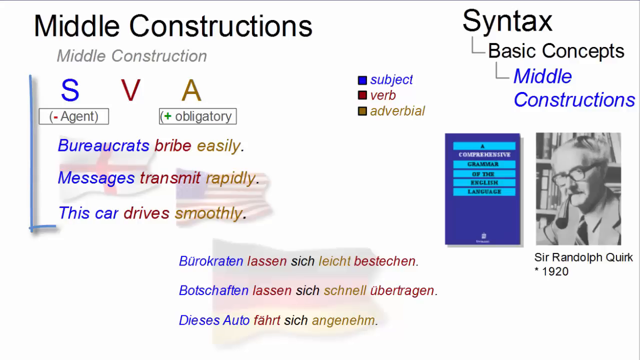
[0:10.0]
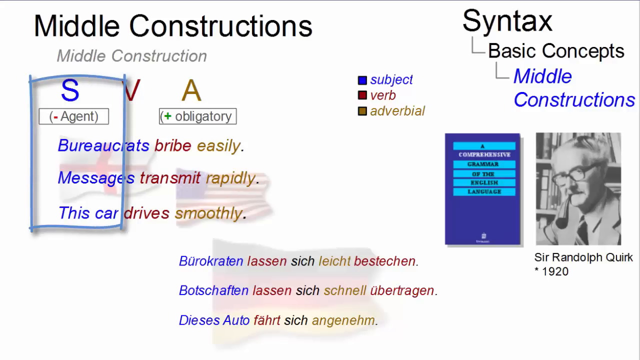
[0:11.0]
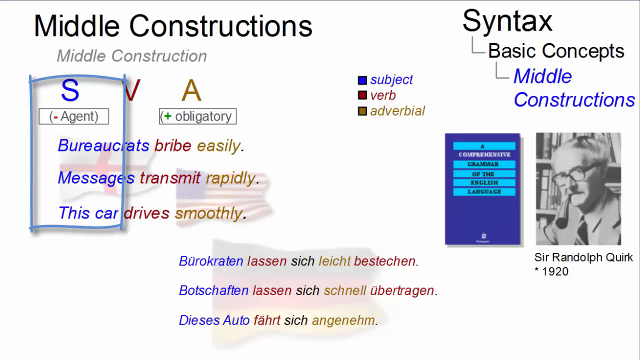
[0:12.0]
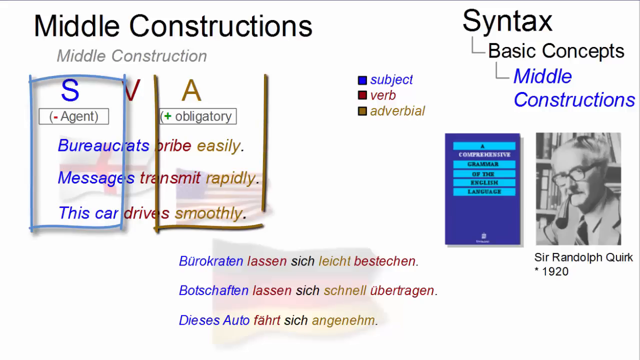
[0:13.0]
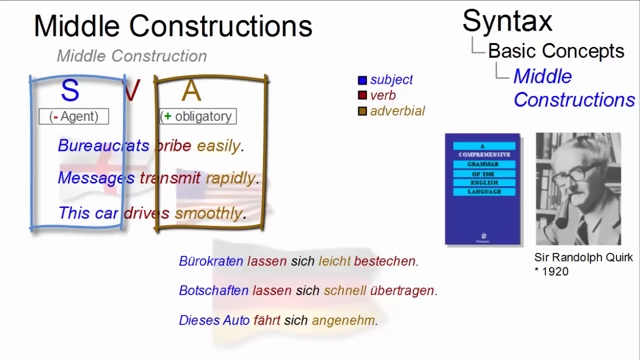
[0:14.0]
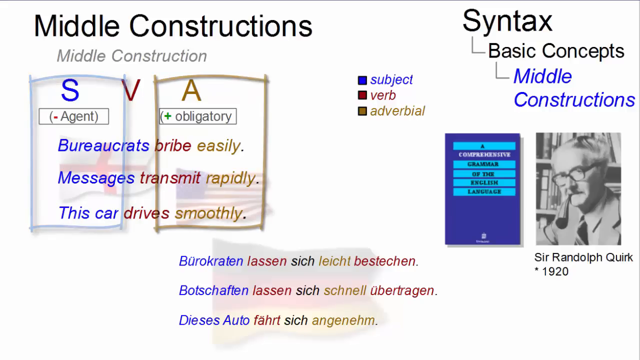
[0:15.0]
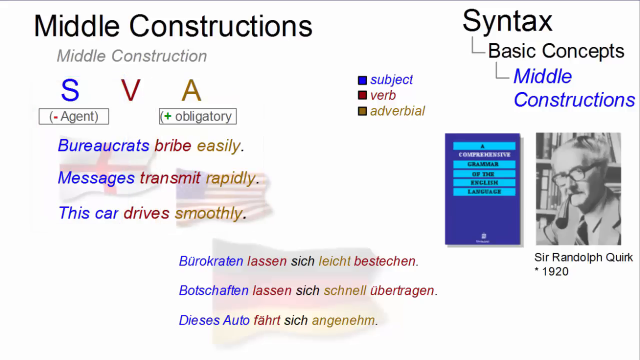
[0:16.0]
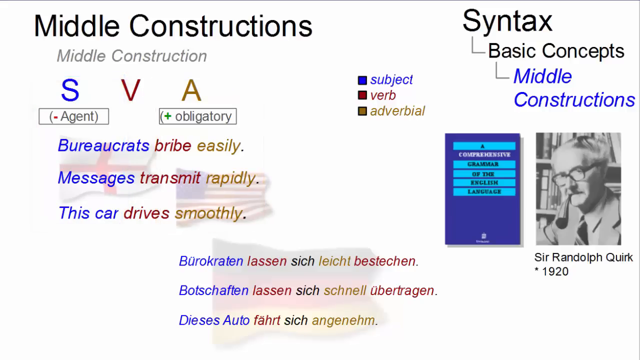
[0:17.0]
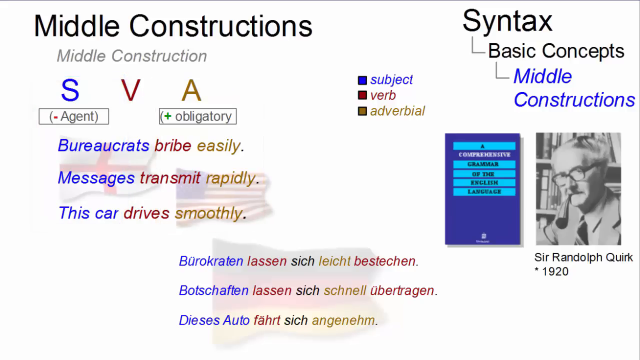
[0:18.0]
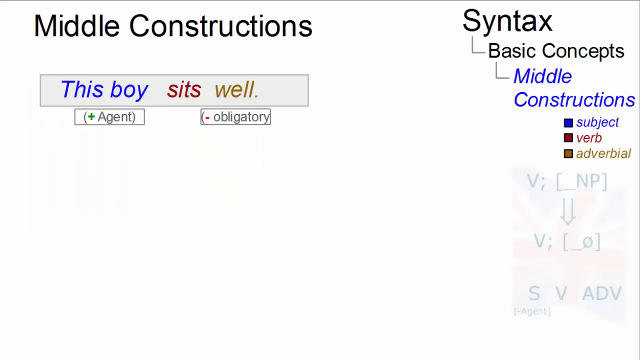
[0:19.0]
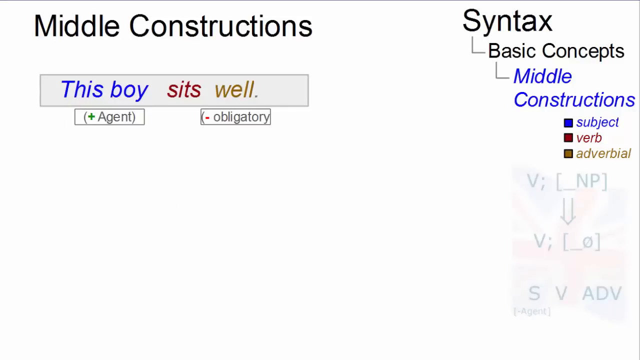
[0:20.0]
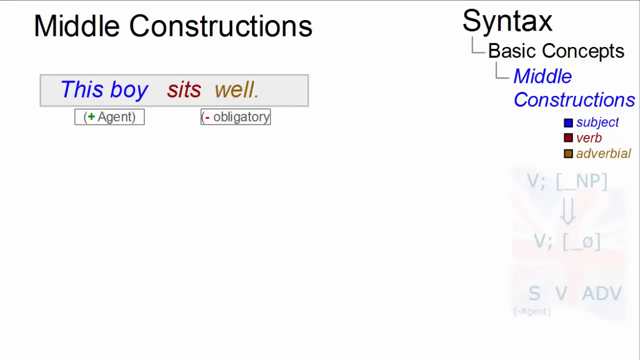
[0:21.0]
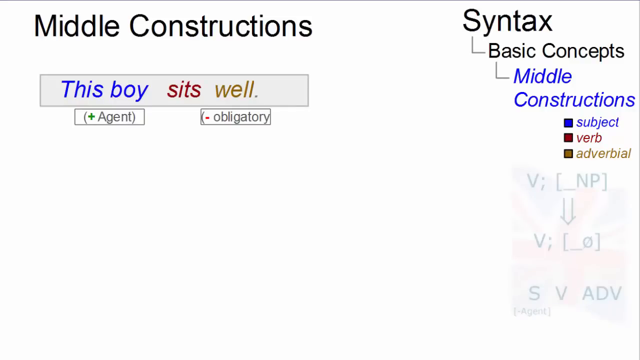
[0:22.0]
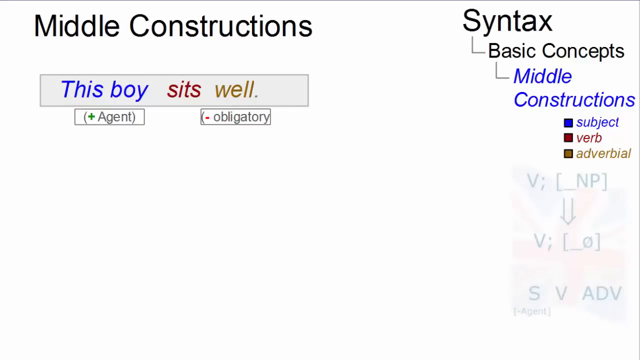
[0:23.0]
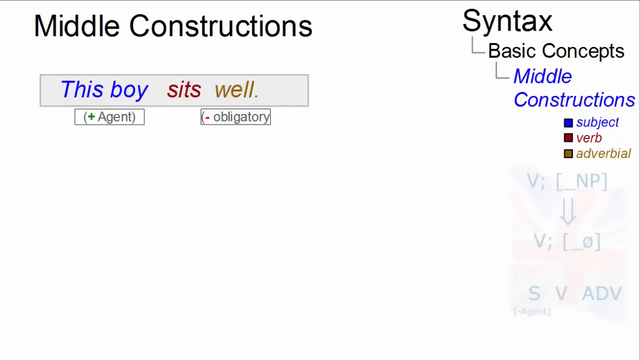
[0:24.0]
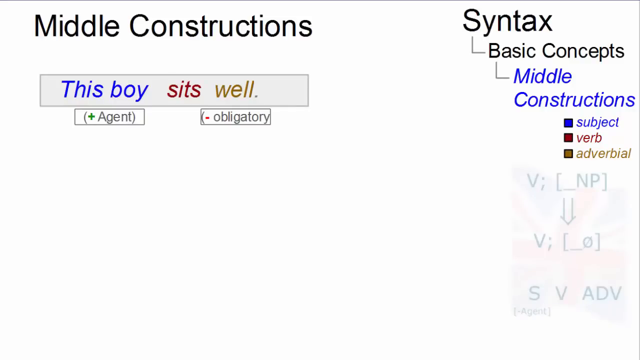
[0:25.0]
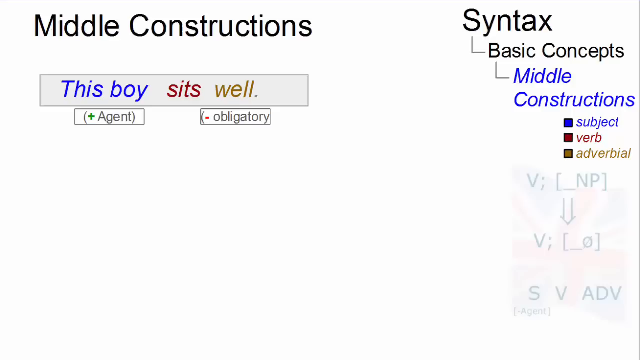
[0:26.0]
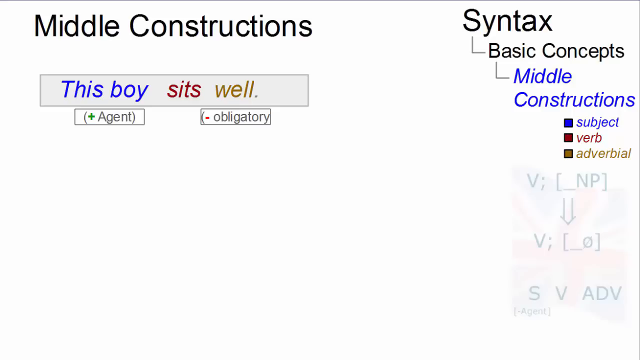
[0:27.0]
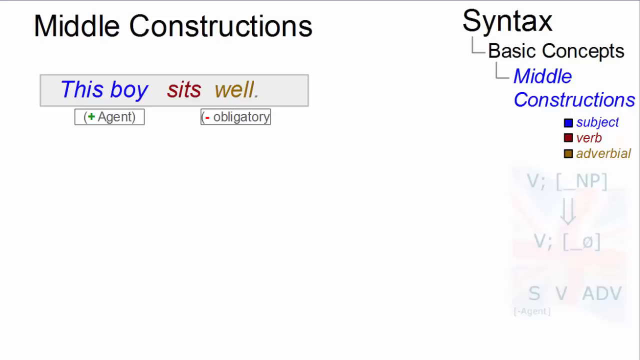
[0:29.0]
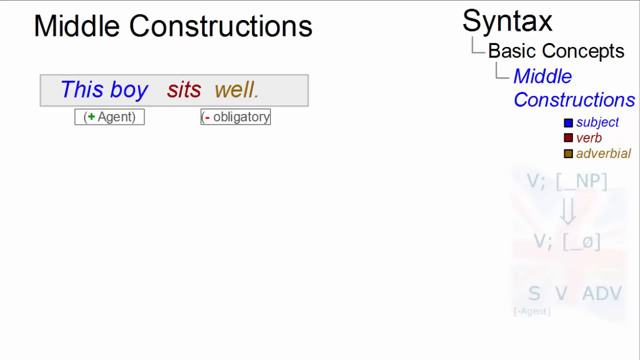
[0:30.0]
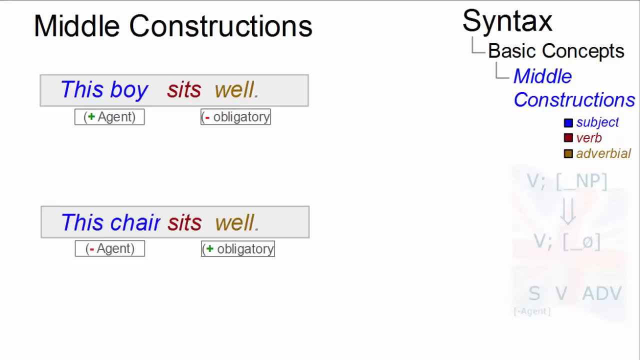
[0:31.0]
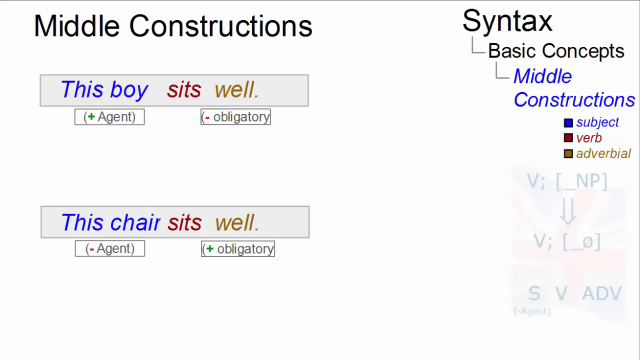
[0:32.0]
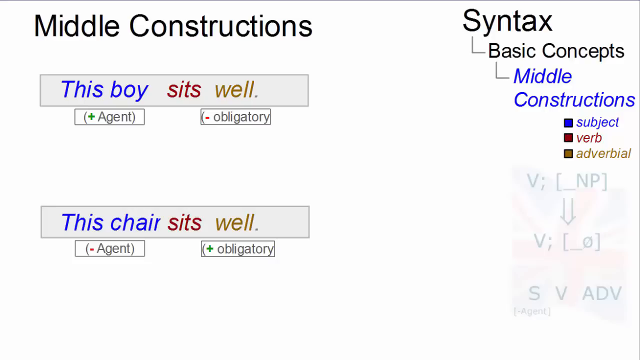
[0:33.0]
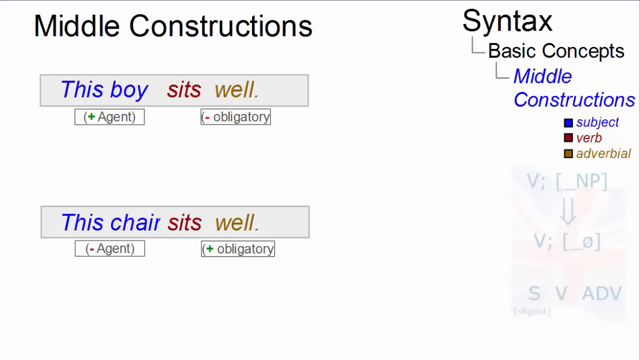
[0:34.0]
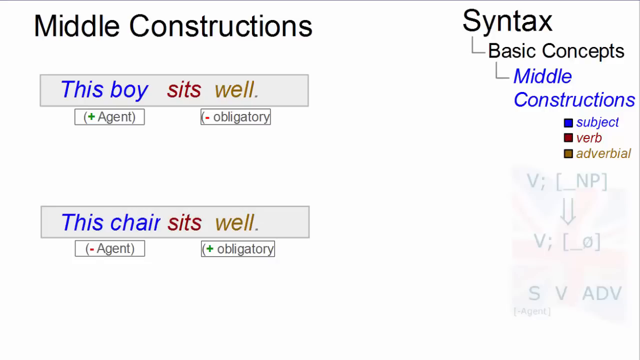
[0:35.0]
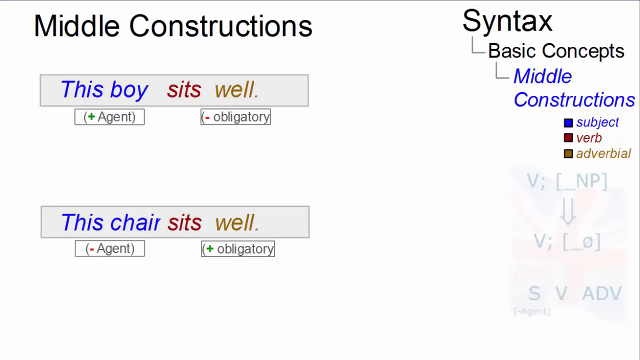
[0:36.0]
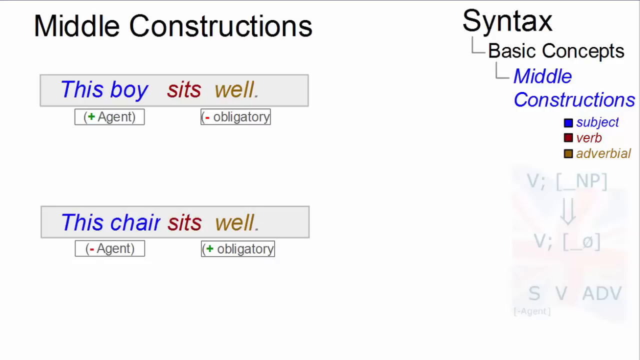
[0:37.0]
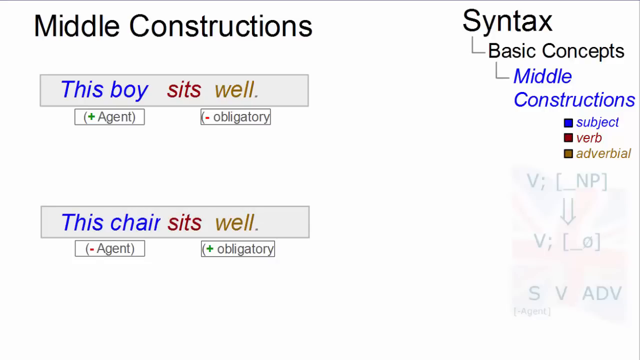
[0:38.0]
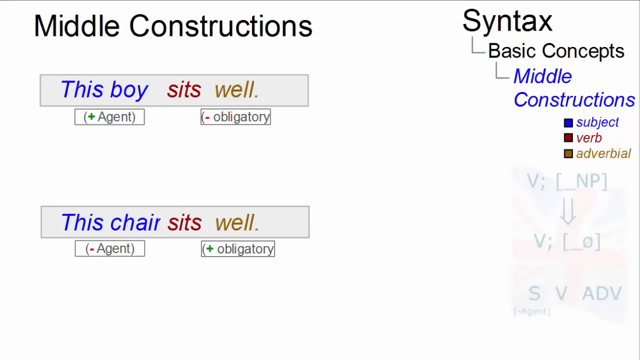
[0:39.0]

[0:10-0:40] The middle constructions slide lists agent and obligatory, with the examples "bureaucrats drive easily", "messages transmit rapidly" and "this car drives smoothly". Subjects are in blue, verbs in red and adverbials in orange, and there is a picture of Sir Randolph Quirk. The man points at the blue squares. S stands for "bureaucrats", "messages" and "this car", and A stands for "easily", "rapidly" and "smoothly". The next page, also titled middle constructions, shows "this boy sits well" and "this chair sits well", each marked with plus or minus for agent and obligatory. A cloud message is above, and "this chair sits well" has a star on the top left.